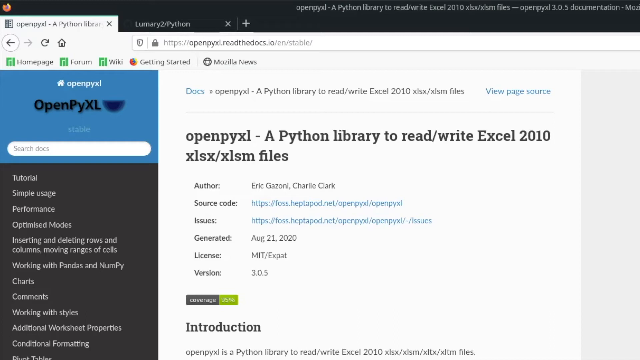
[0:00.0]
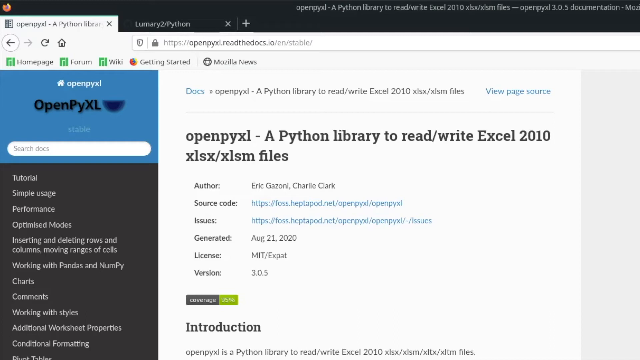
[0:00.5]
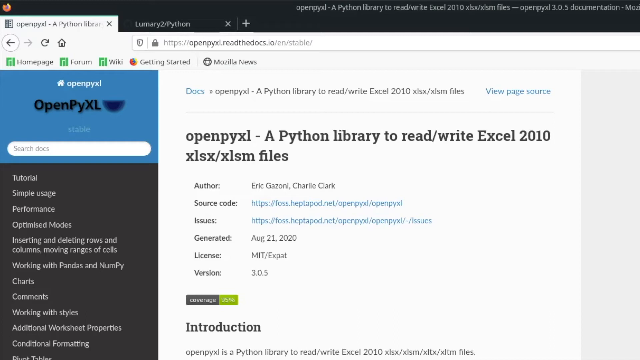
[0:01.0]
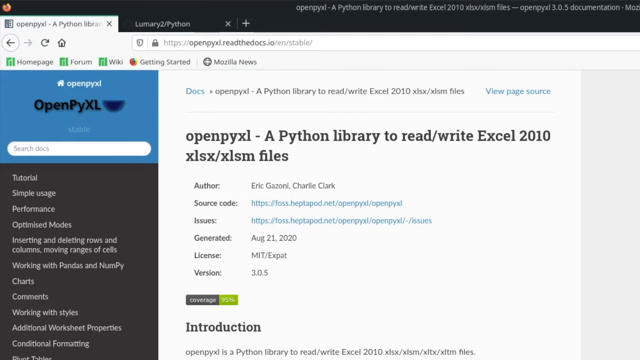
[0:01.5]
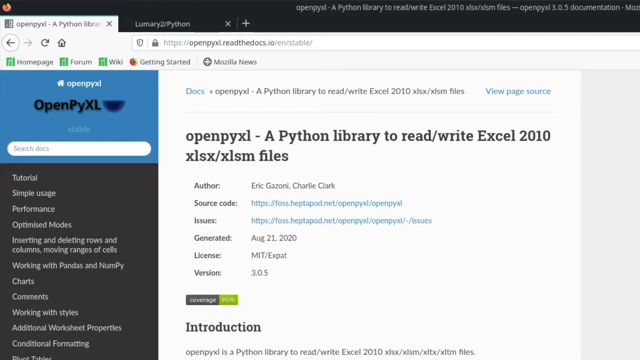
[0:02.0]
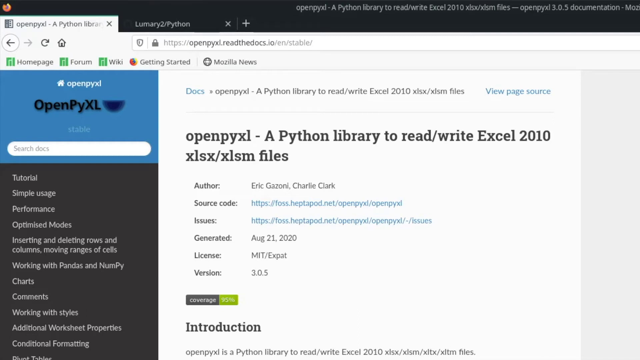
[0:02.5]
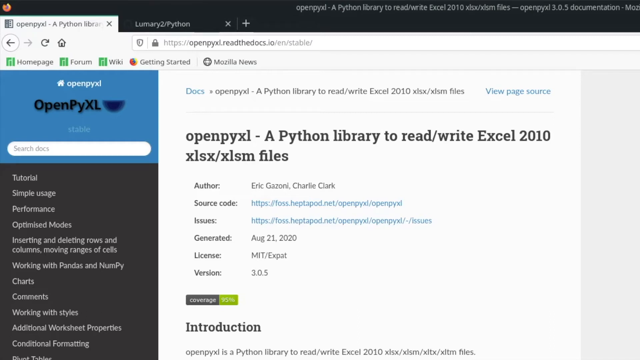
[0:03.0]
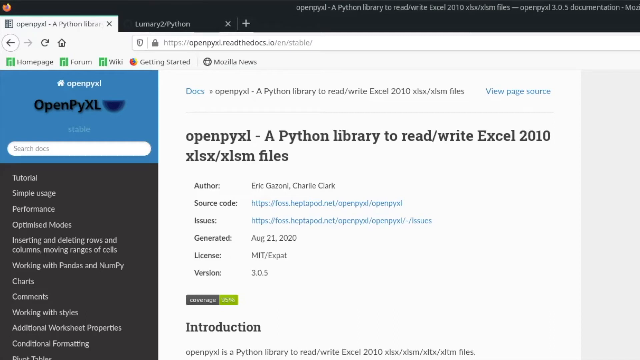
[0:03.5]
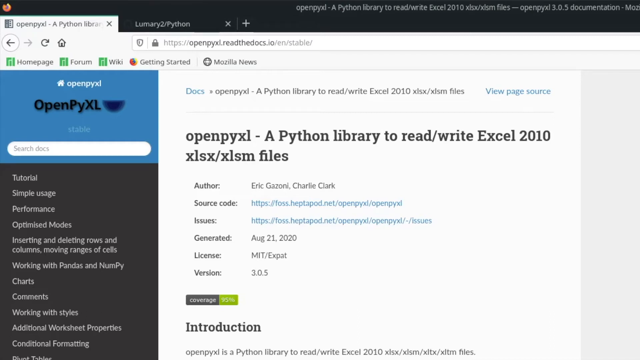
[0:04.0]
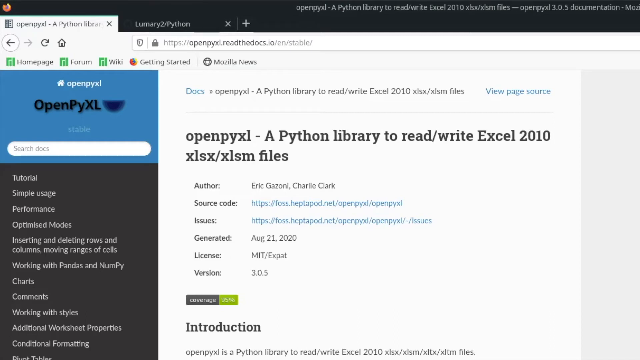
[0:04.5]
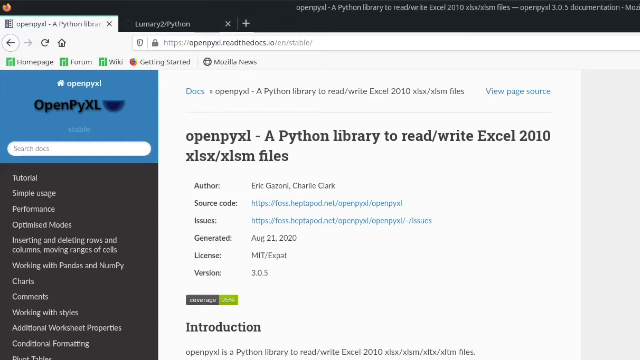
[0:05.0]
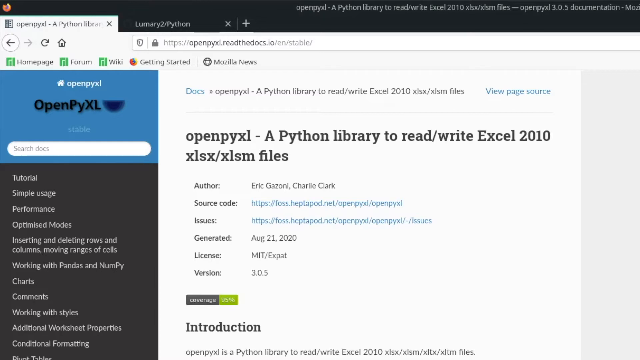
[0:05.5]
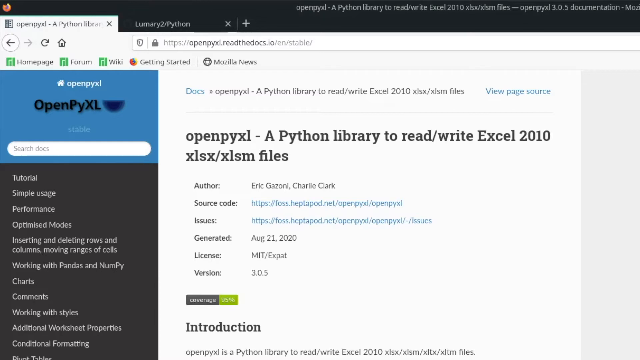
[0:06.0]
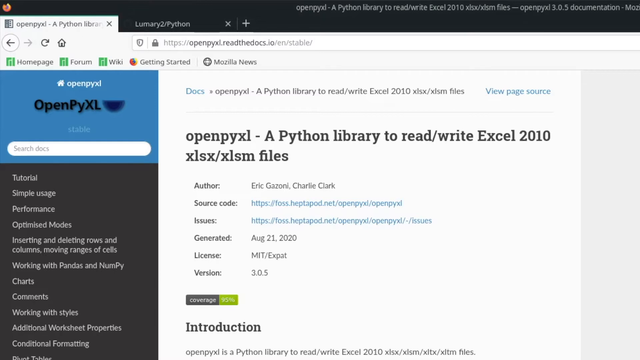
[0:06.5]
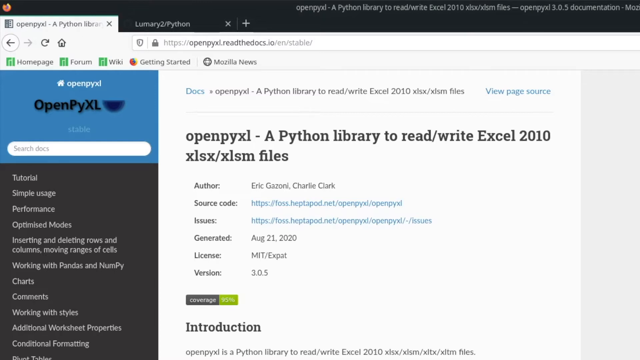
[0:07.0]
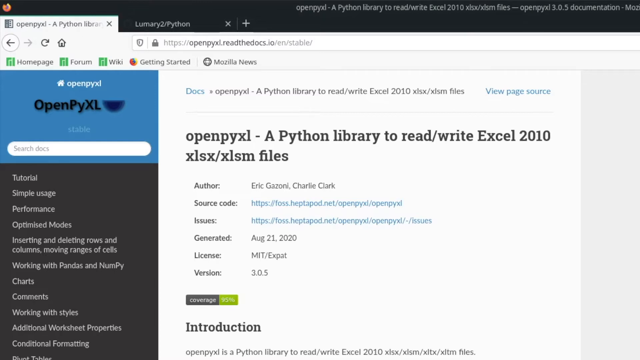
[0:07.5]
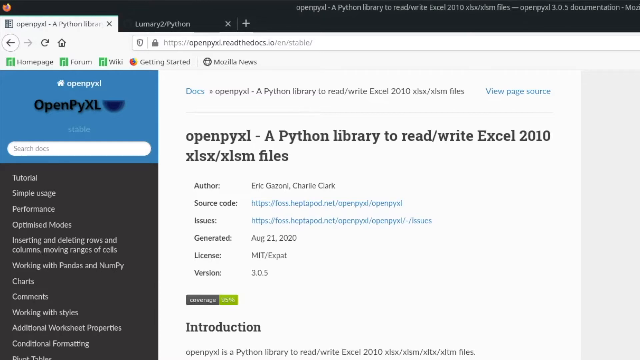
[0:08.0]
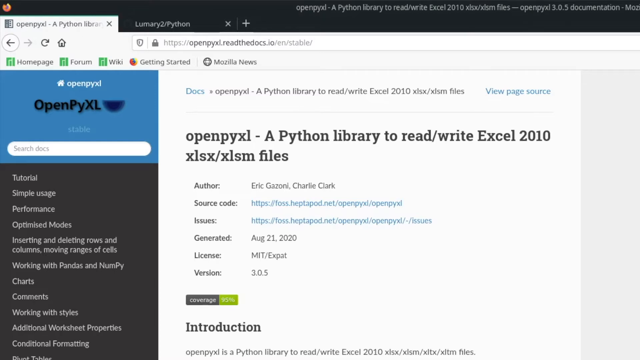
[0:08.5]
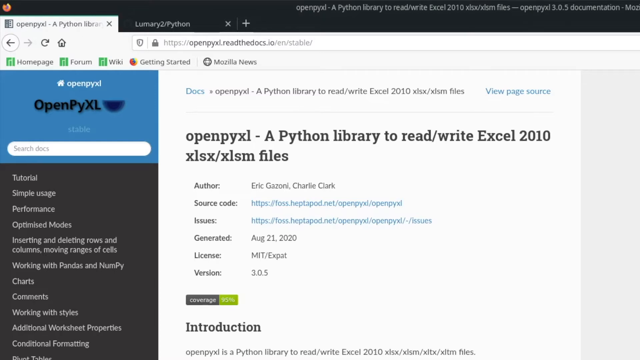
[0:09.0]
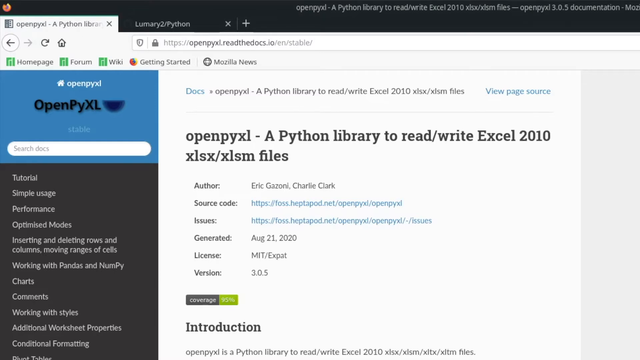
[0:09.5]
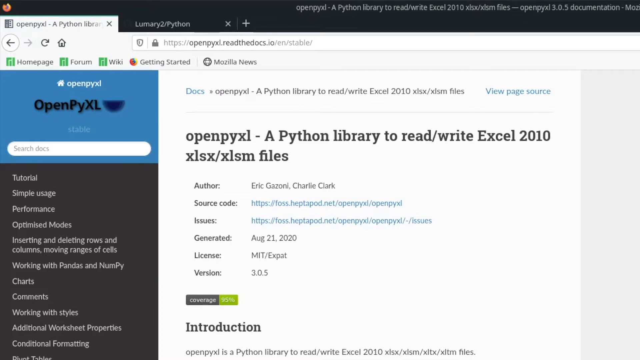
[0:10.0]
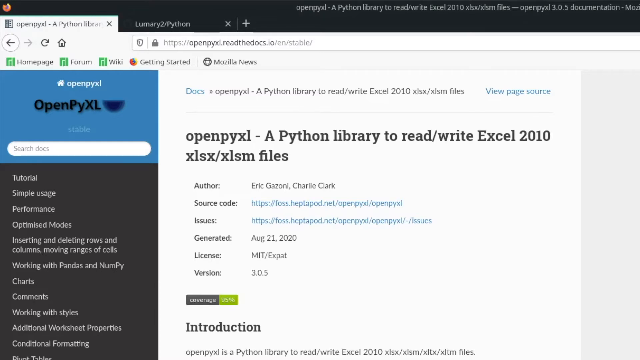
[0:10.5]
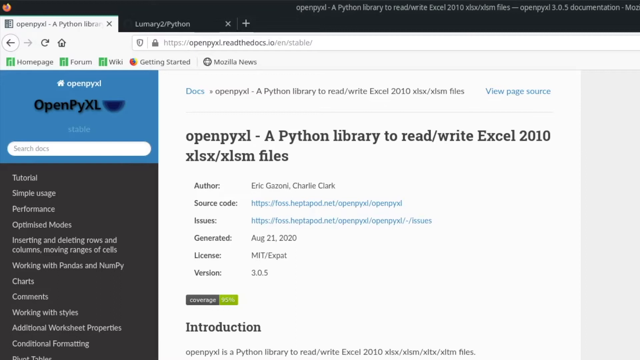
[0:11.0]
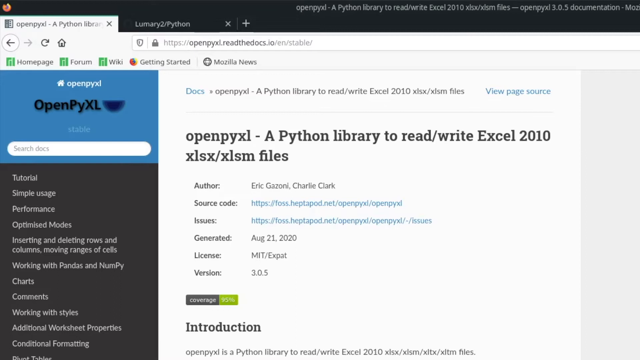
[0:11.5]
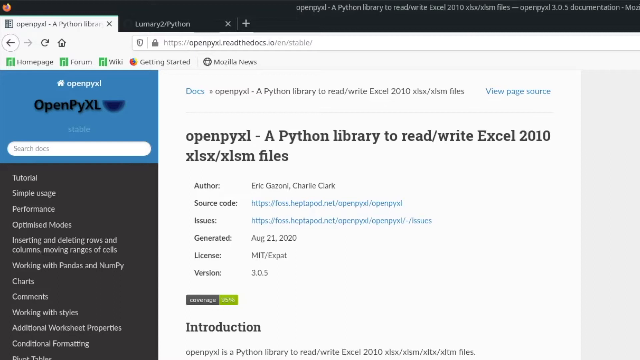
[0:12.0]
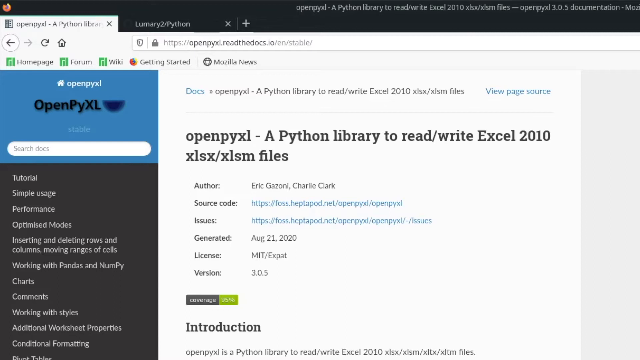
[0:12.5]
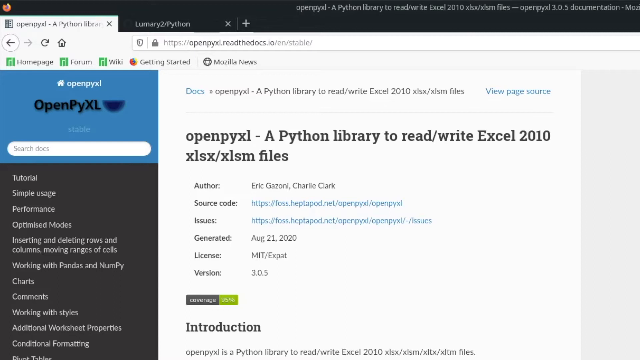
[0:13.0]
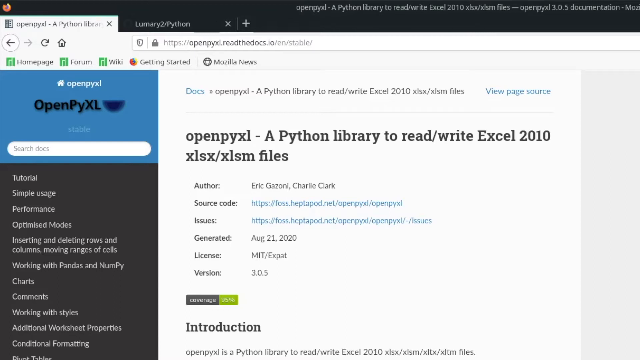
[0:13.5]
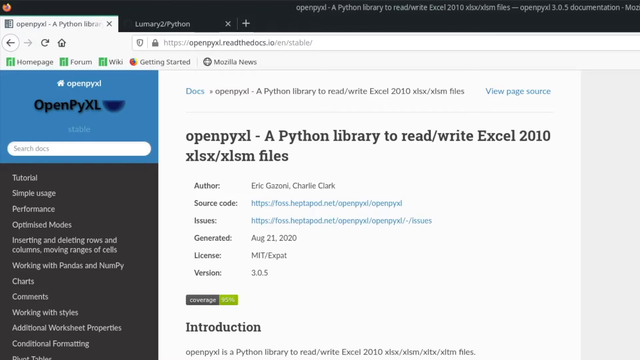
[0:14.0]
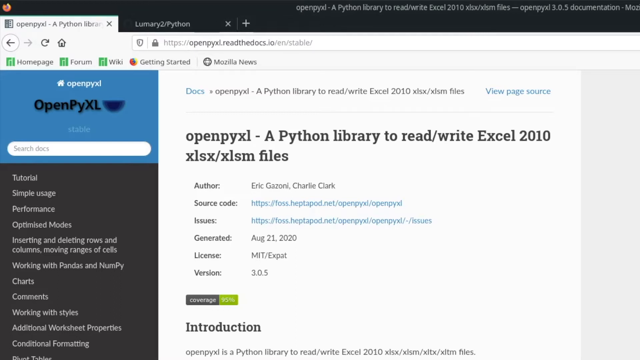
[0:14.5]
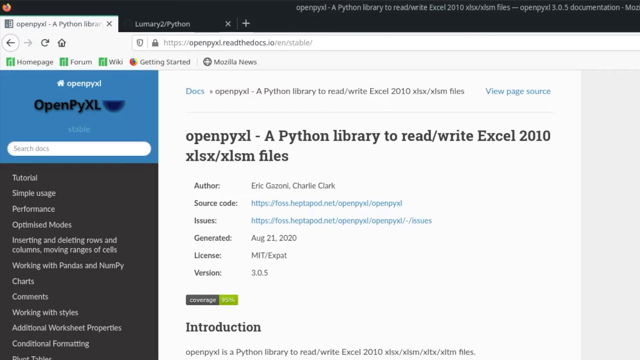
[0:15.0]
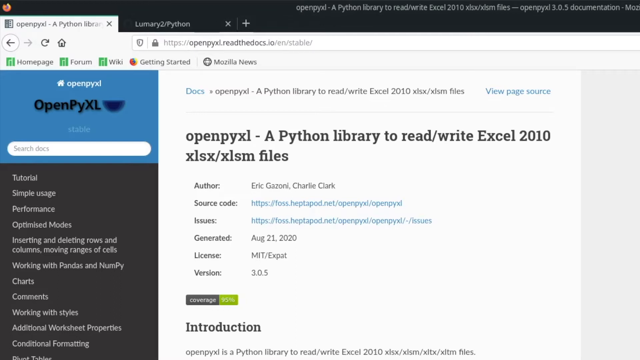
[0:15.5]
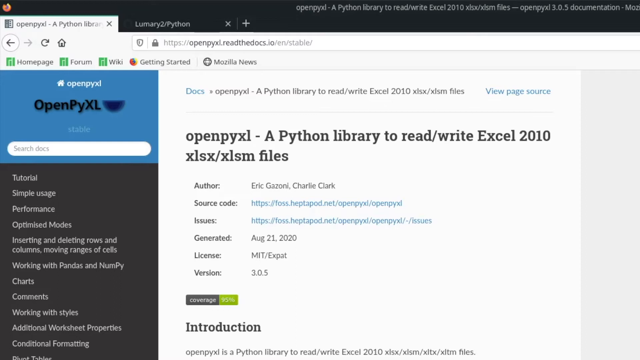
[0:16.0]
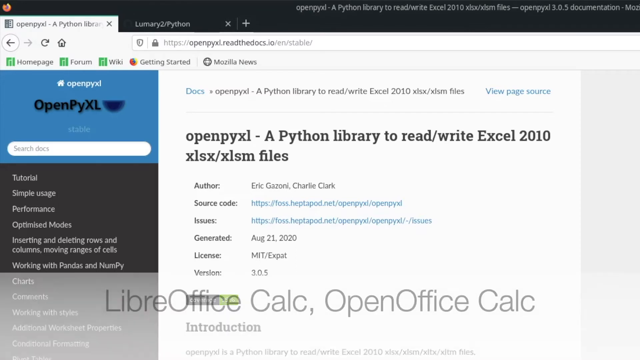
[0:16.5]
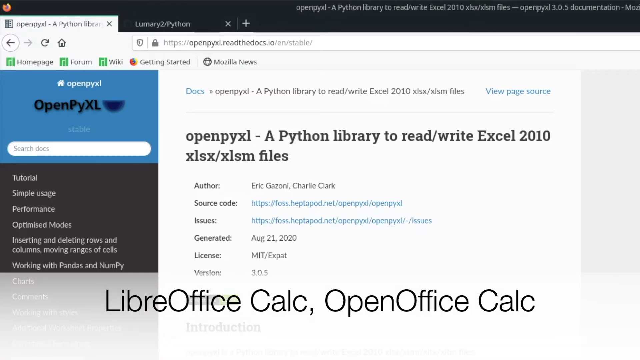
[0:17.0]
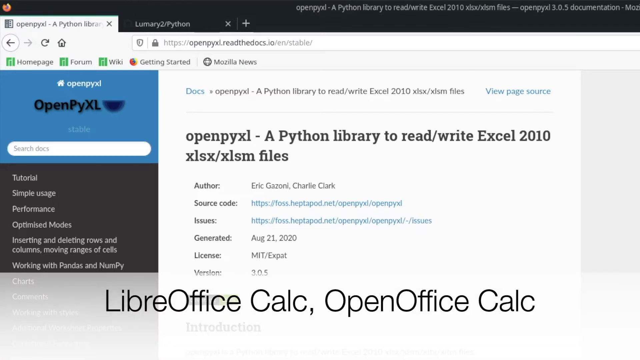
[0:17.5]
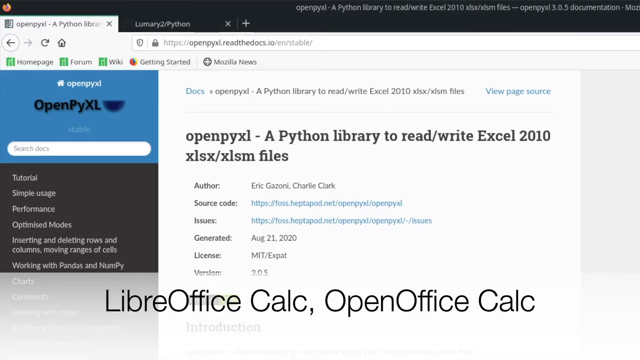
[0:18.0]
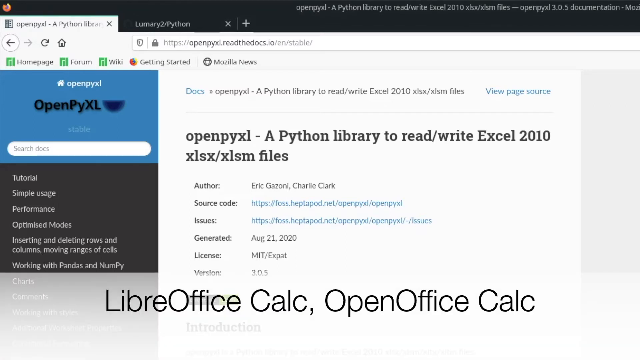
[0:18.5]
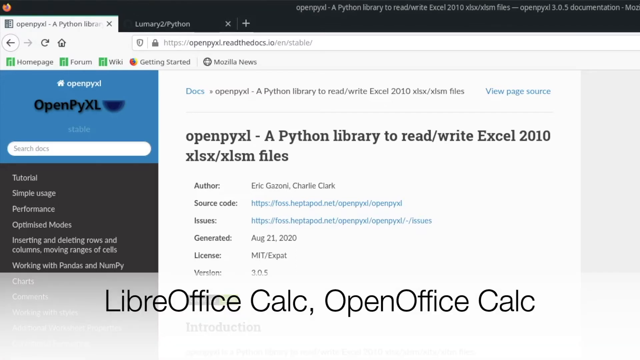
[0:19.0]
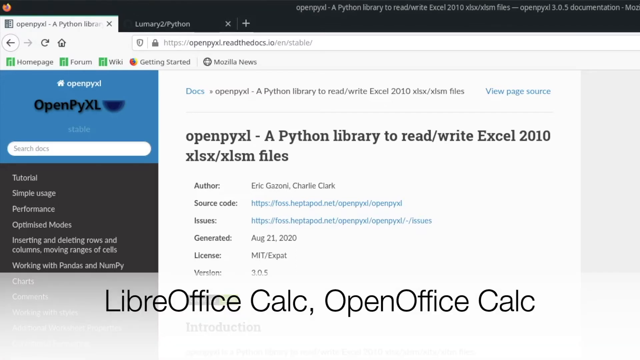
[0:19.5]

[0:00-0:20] A computer screen shows a website open, with "openpyxl.readthedocs.io" in the search bar at the very top. Underneath are five tabs, which read from left to right "homepage," "forum," "wiki," "getting started" and "Mozilla News." Below that, at the top of the page, it says "Docs openpyxl, a Python library to read-write Excel 2010," and underneath the same text appears in big, bold, black letters. A panel comes in from the left side of the screen; its top is blue and its bottom half is black. The blue part reads "openpyxl," and below it is a white space that says "search docs." Underneath that is a list: "tutorial, simple usage, performance, optimize the modes, inserting and deleting rows and columns, moving ranges of cells, working with pandas and numpy, charts, comments, working with styles, additional worksheet properties, conditioning and formatting."